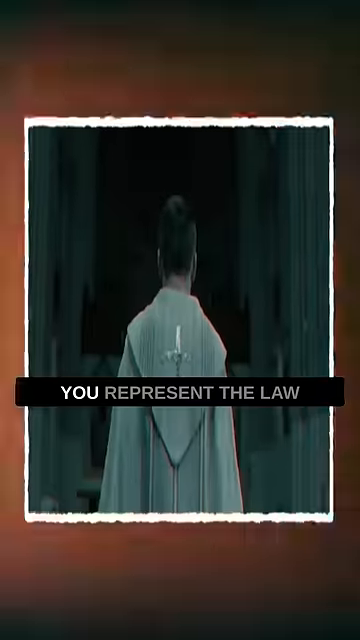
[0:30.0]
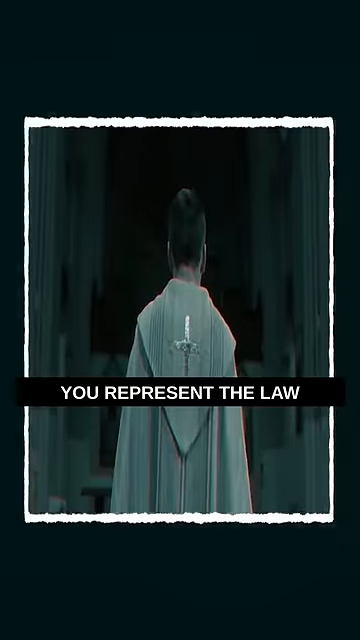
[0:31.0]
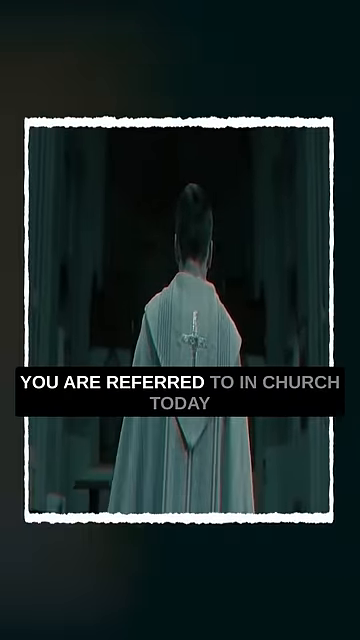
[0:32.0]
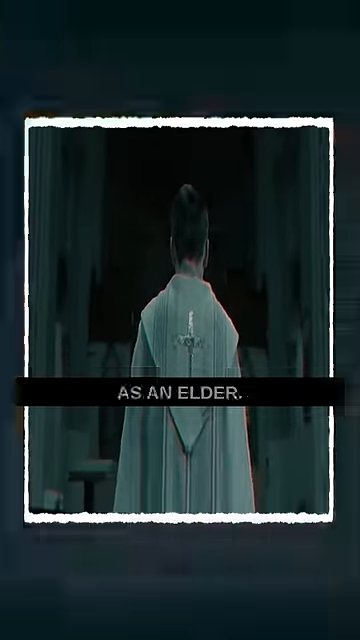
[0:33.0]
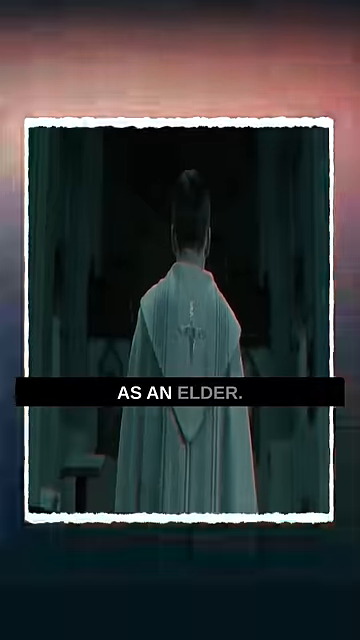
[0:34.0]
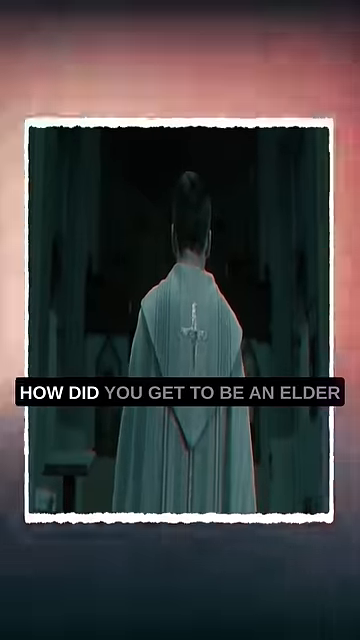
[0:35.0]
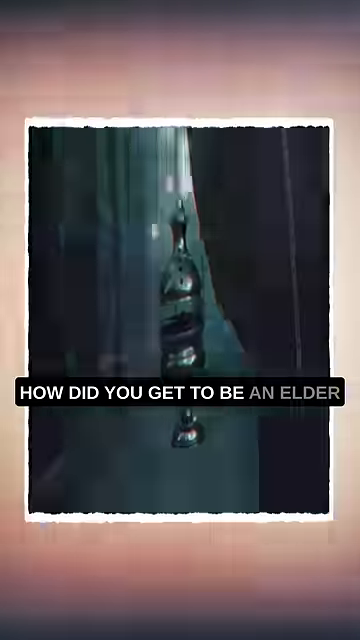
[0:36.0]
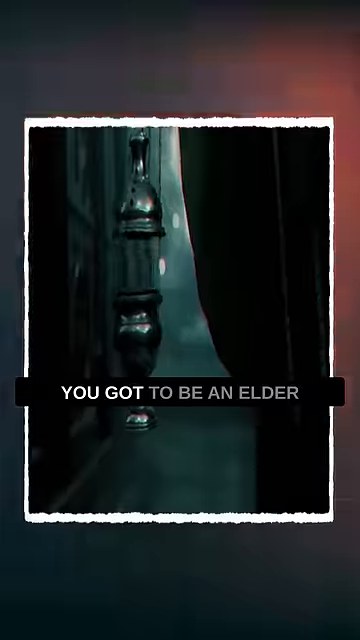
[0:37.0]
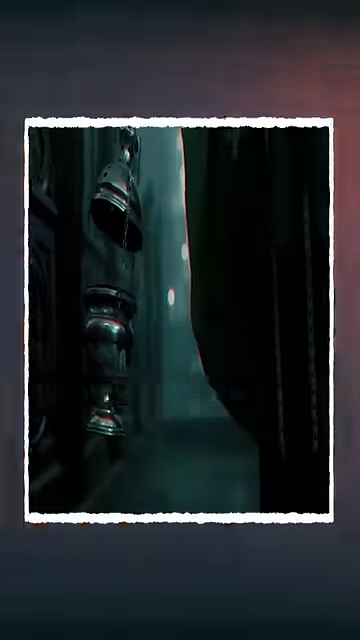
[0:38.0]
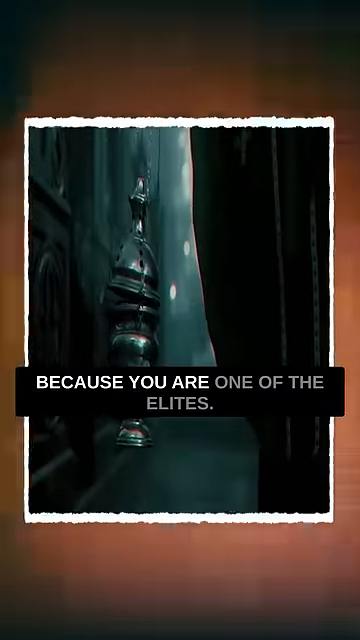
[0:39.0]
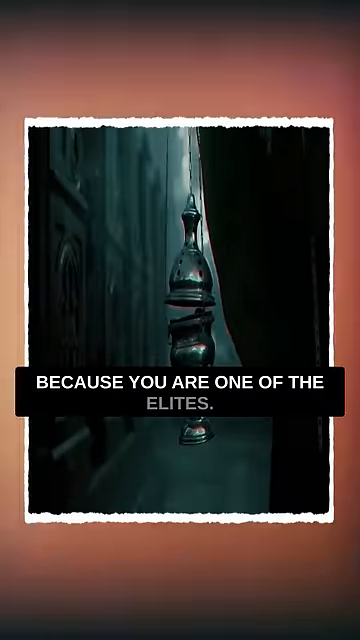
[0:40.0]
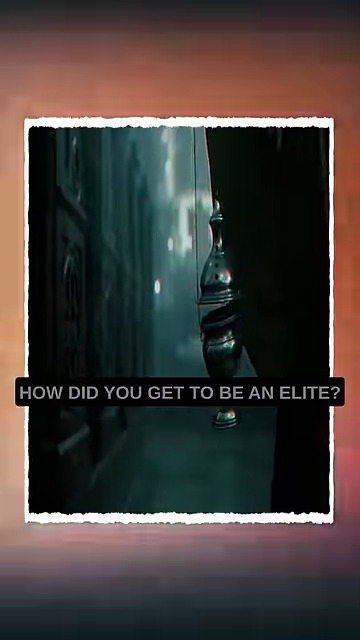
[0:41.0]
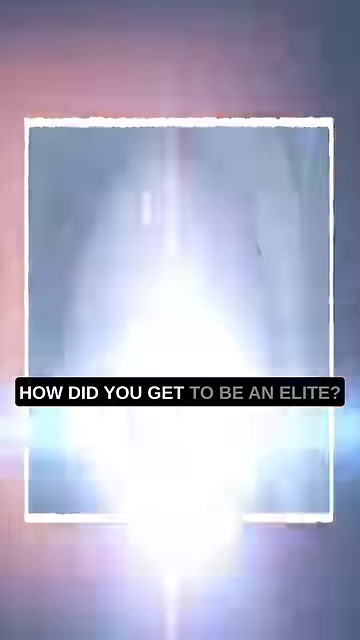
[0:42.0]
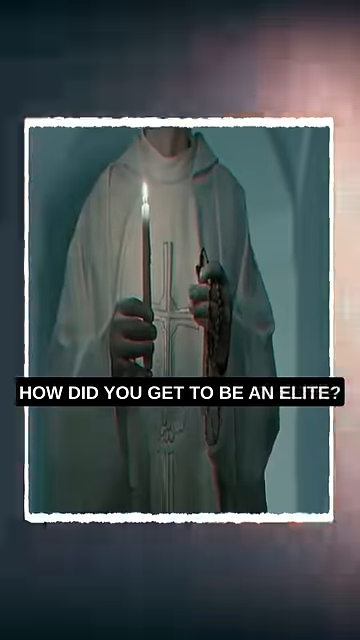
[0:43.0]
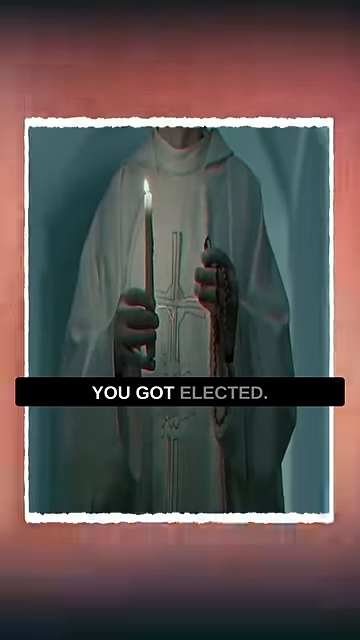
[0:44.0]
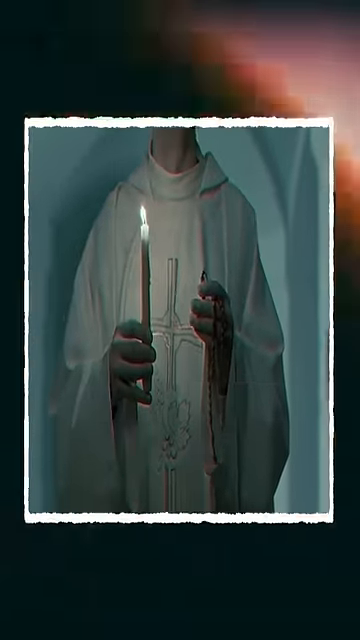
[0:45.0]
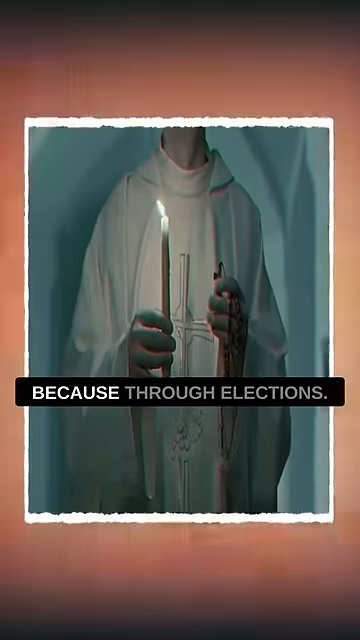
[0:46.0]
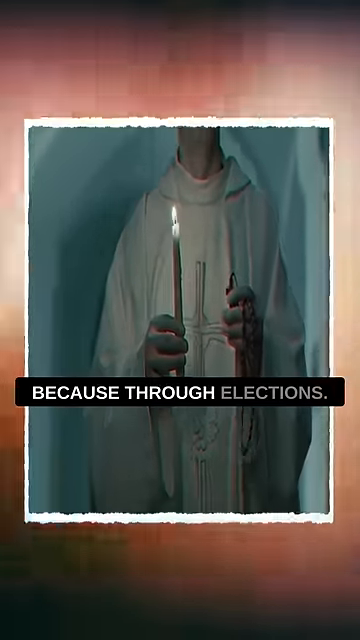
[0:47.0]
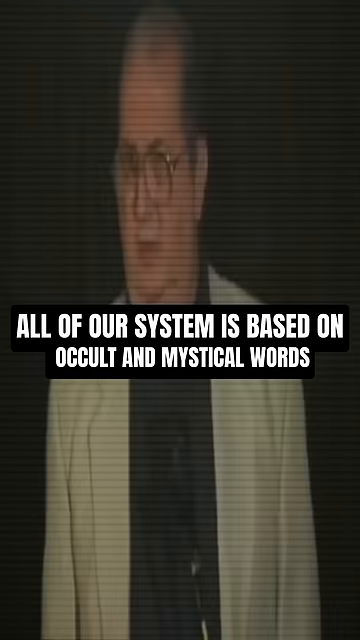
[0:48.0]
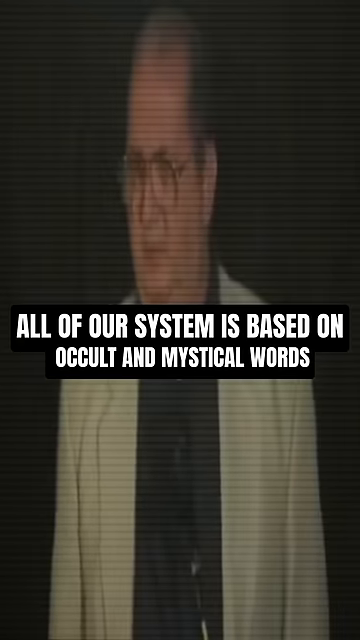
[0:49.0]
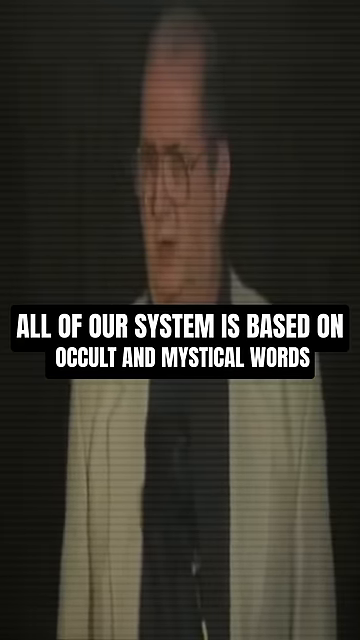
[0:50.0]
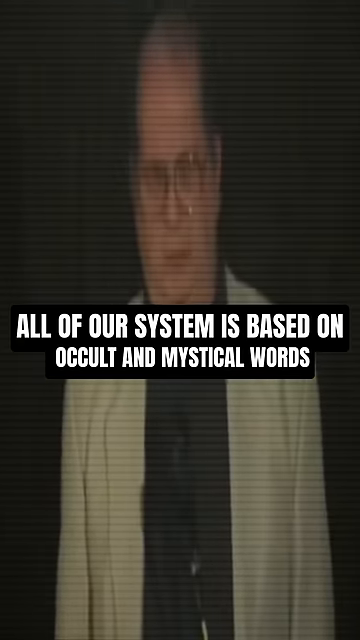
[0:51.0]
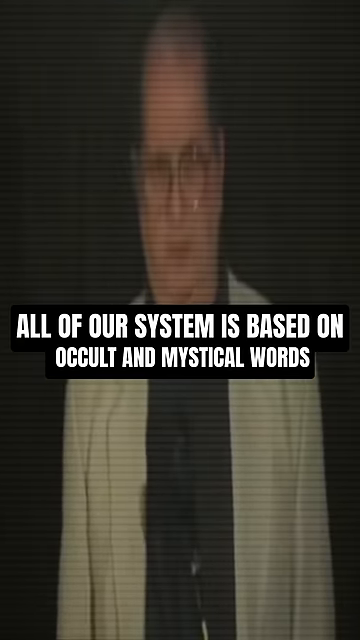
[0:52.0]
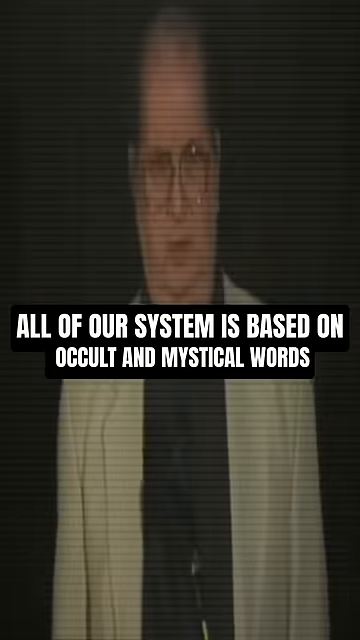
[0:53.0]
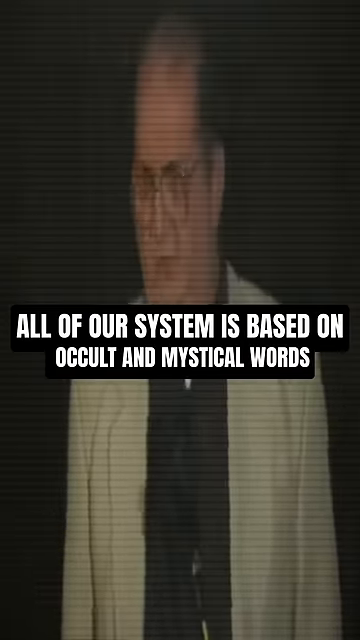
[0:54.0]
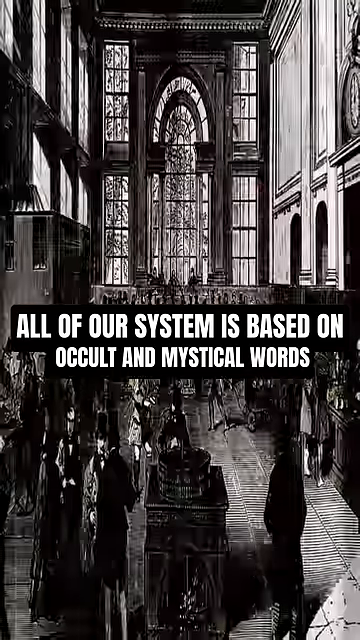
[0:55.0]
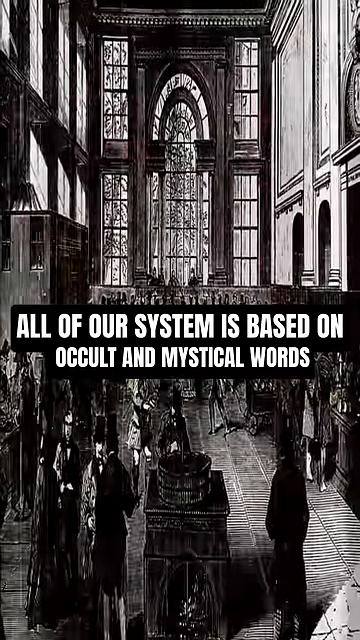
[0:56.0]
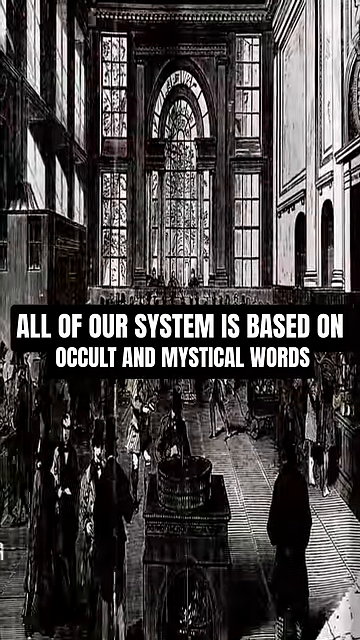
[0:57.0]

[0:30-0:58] The scene is taller than it is wide, with a kind of orangey-red background and a photograph in the middle. The photograph shows the back of what appears to be possibly a young boy, wearing some sort of tunic with a silver cross in the center of his back, where a hood would be draped. Overlaid text at the bottom, in white capital letters on a black background, reads "you represent the law," then changes to "you are referred to in church today," then "as an elder," and then "how did you get to be an elder? You got to be an elder because you are one of the elites. How did you get to be an elite? You got elected because through elections all of our system is based on occult and mystical words." As that last phrase appears, the picture shows an old man in a white suit facing the viewer. The video then switches to black-and-white footage that seems very old, like old film, and looks to be possibly the inside of a church. Stained glass windows several stories high are in the background, and in a walking area in the front are people in top hats and other very old attire.